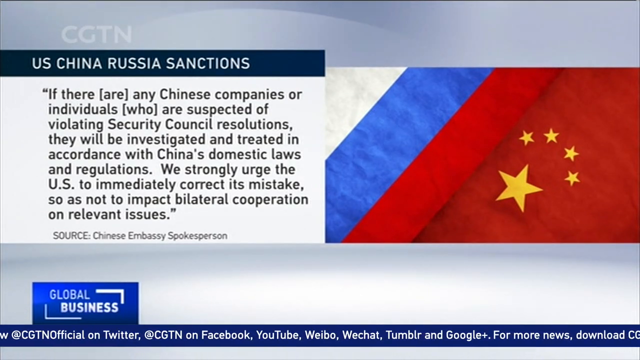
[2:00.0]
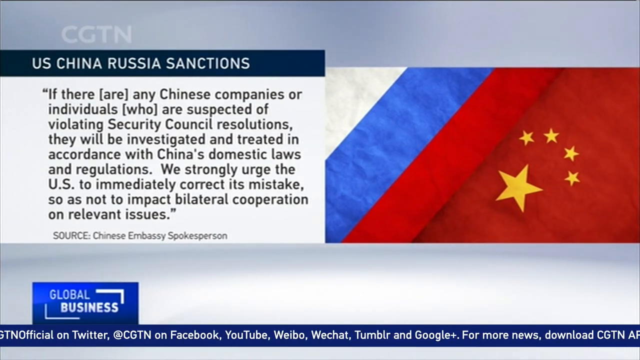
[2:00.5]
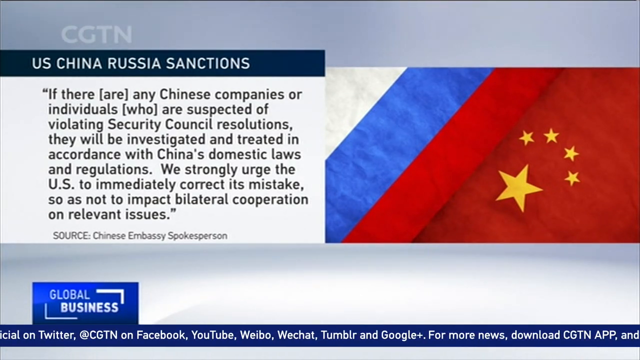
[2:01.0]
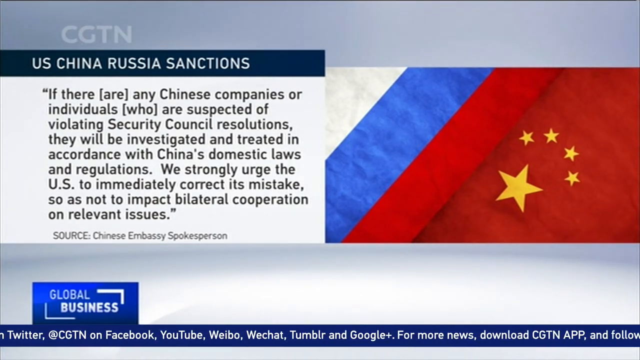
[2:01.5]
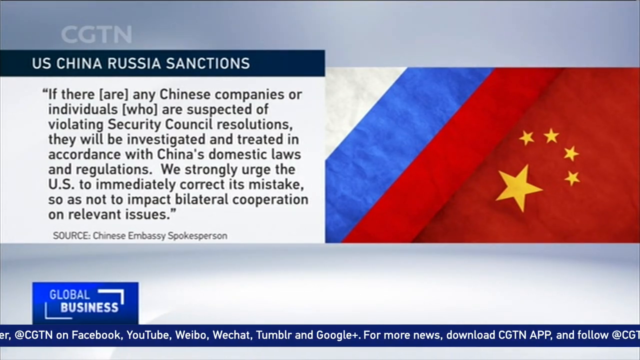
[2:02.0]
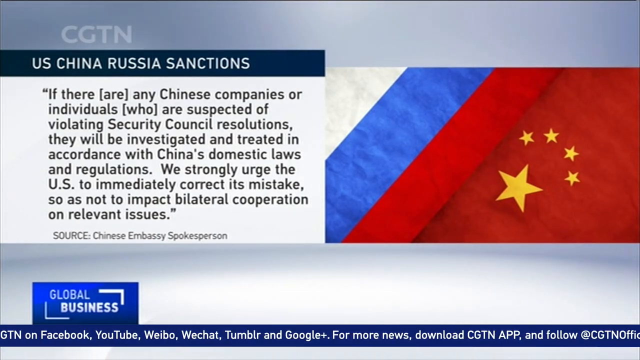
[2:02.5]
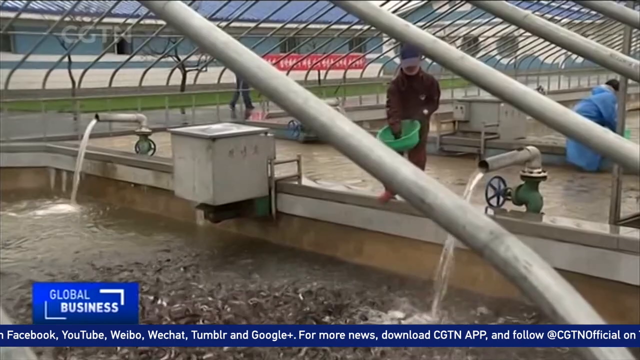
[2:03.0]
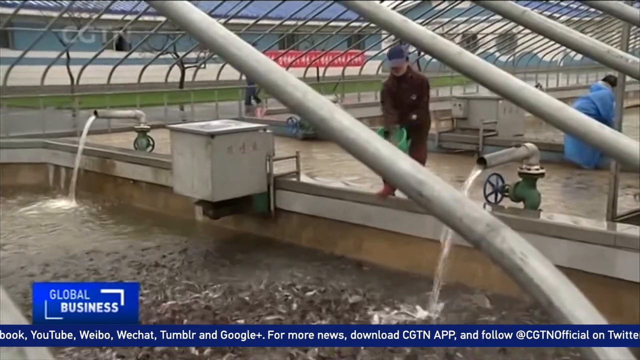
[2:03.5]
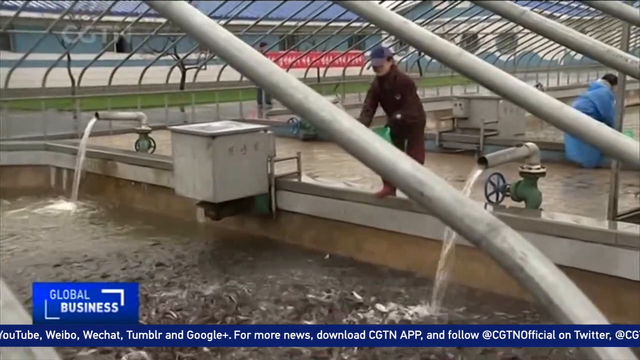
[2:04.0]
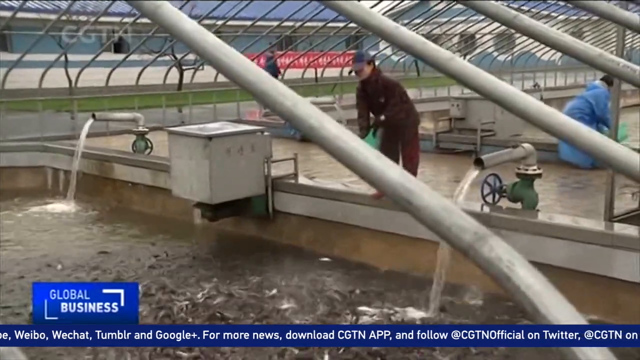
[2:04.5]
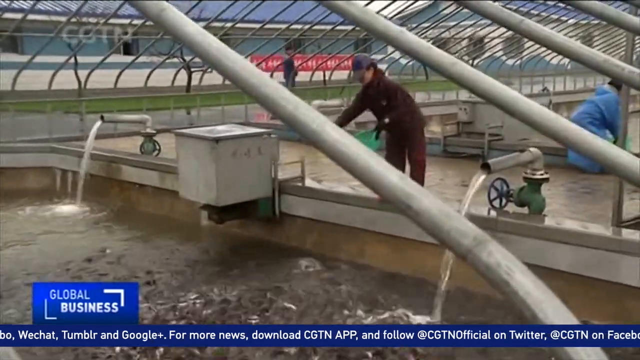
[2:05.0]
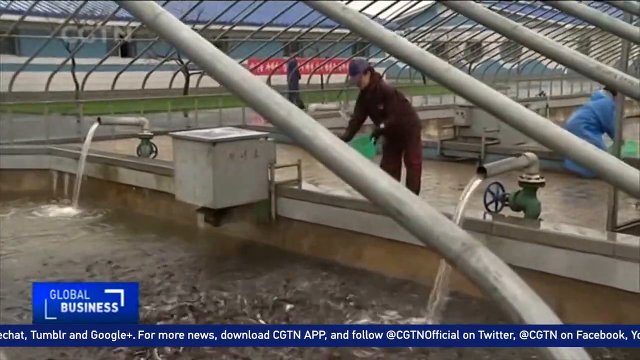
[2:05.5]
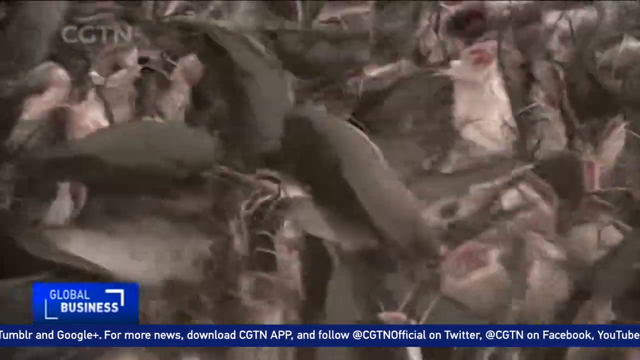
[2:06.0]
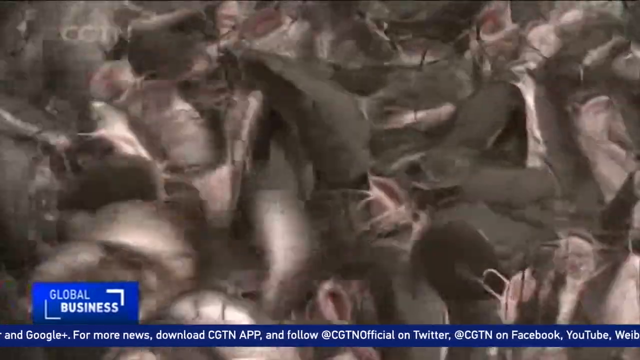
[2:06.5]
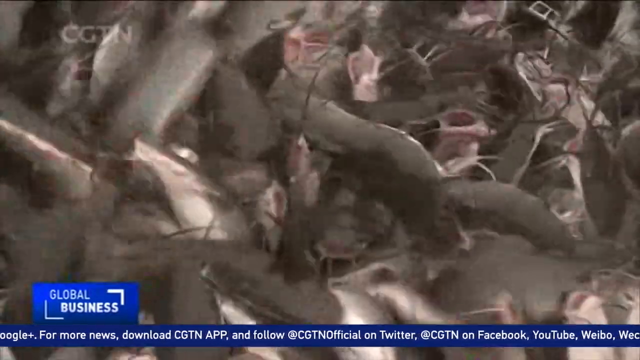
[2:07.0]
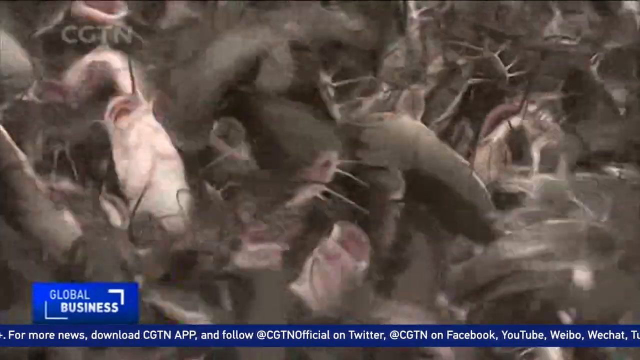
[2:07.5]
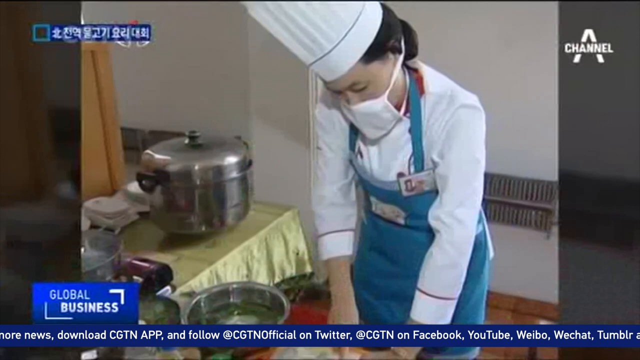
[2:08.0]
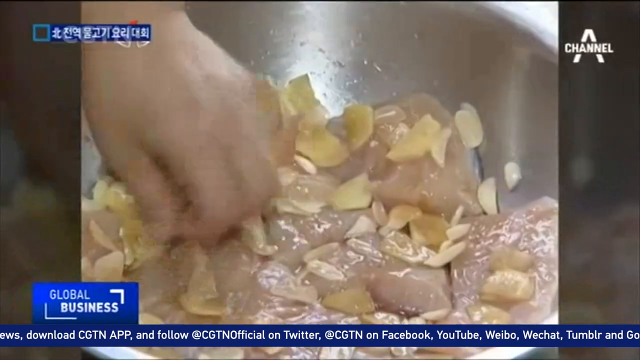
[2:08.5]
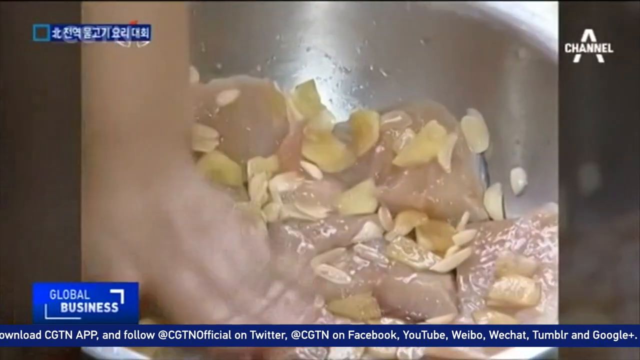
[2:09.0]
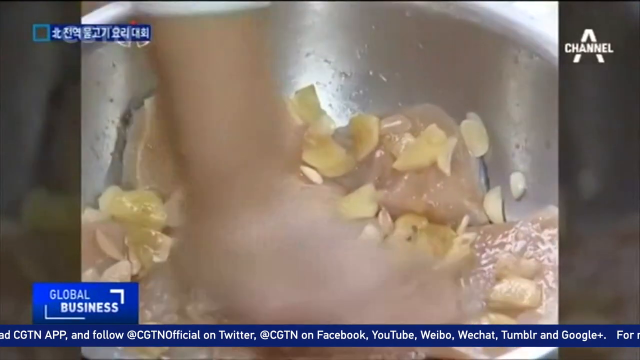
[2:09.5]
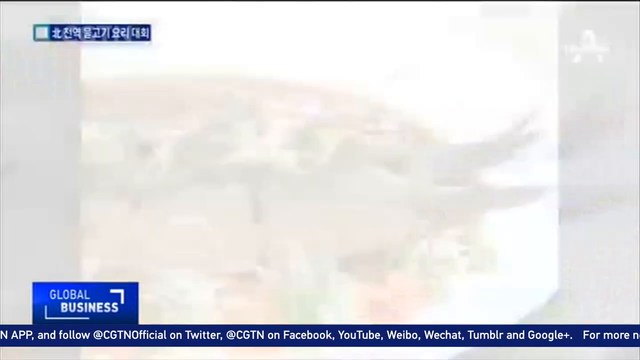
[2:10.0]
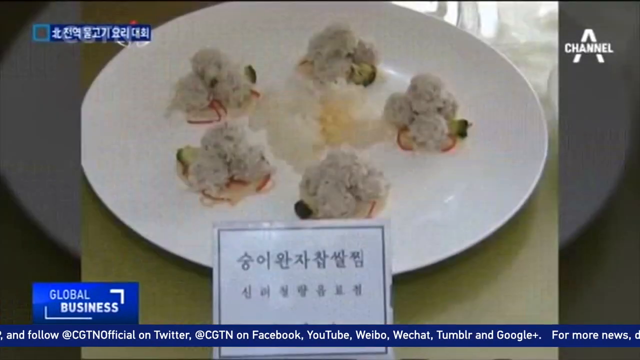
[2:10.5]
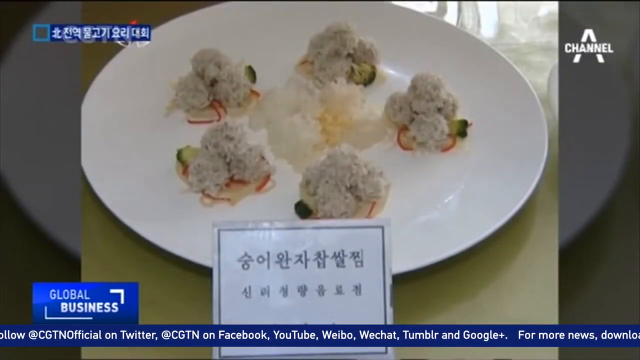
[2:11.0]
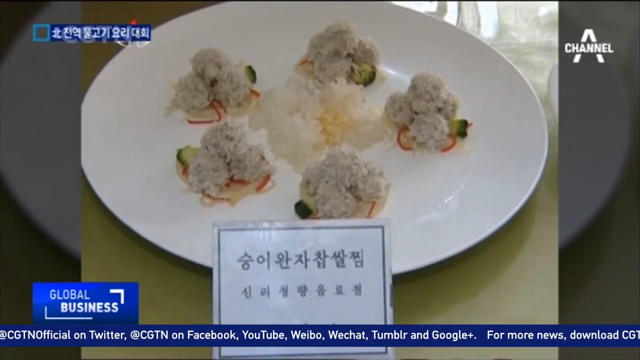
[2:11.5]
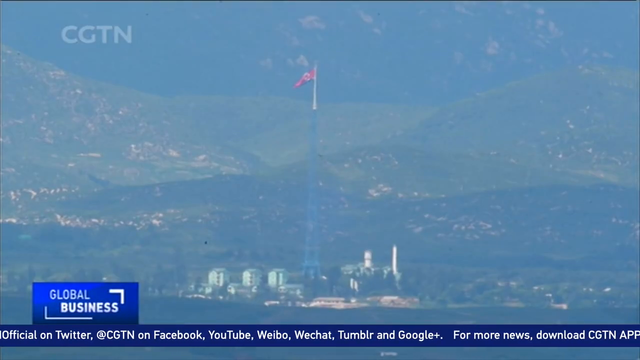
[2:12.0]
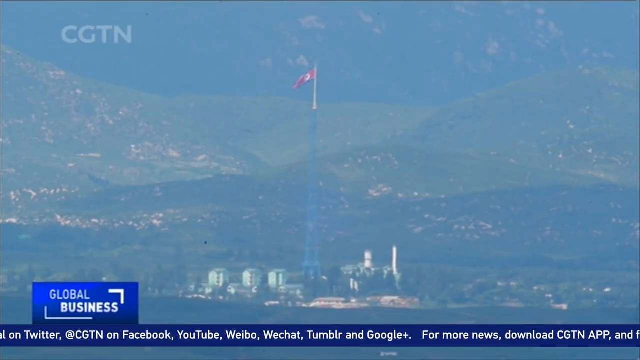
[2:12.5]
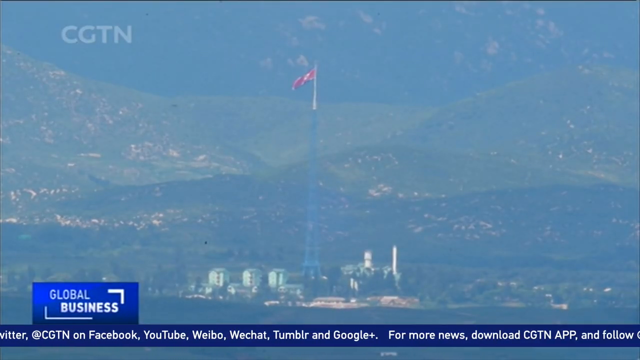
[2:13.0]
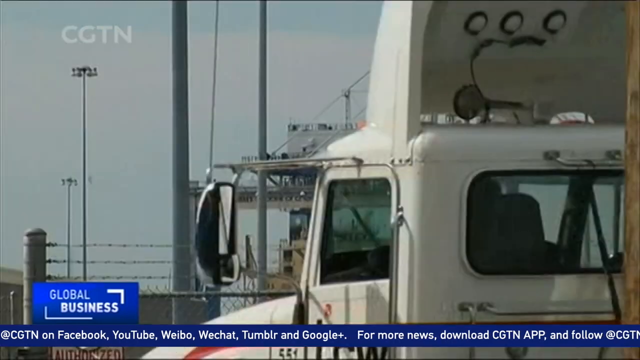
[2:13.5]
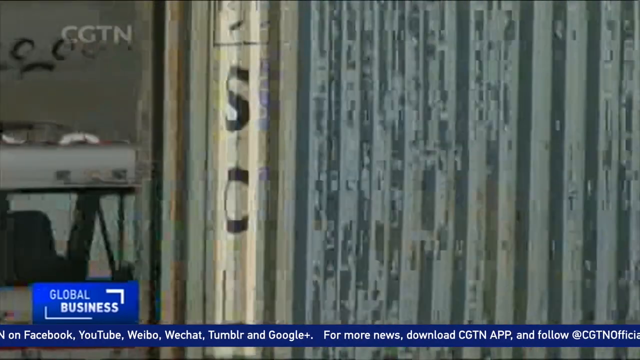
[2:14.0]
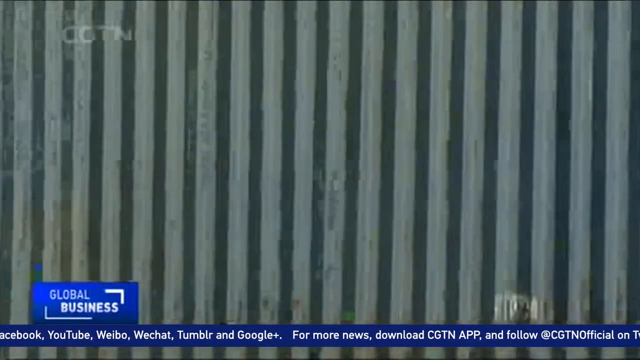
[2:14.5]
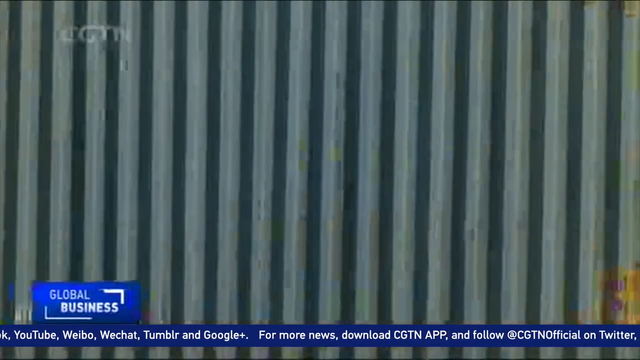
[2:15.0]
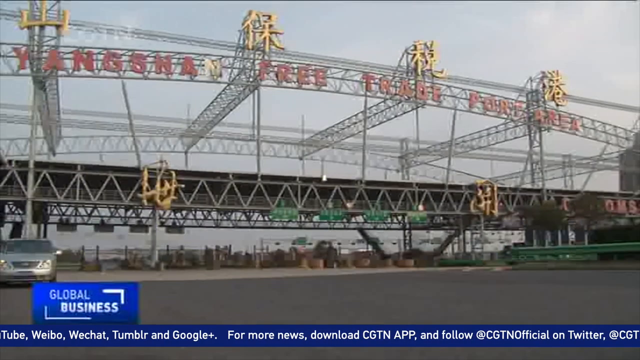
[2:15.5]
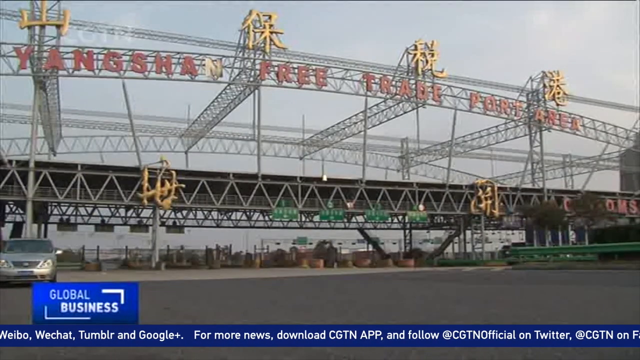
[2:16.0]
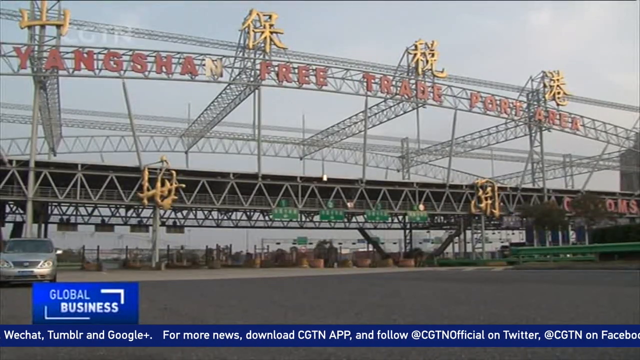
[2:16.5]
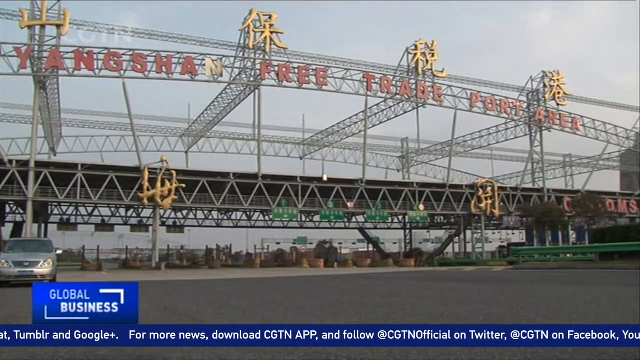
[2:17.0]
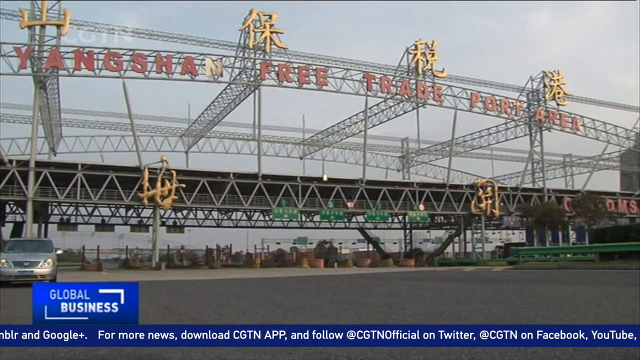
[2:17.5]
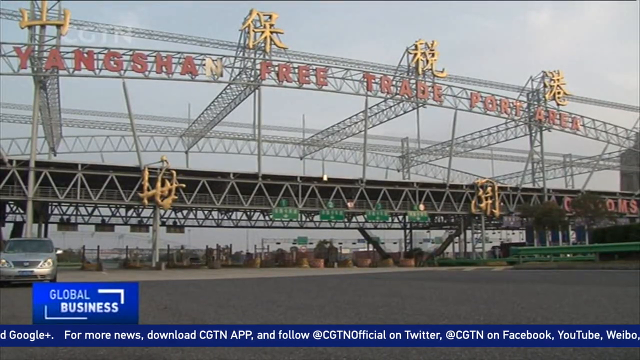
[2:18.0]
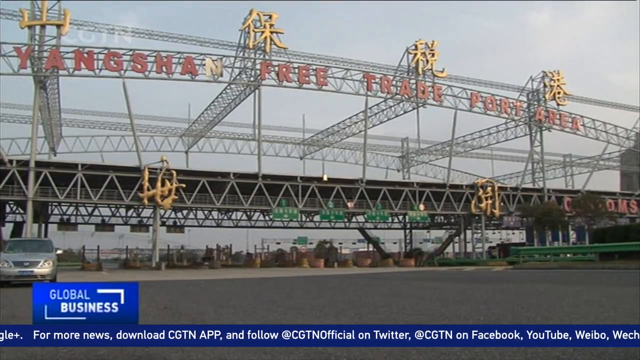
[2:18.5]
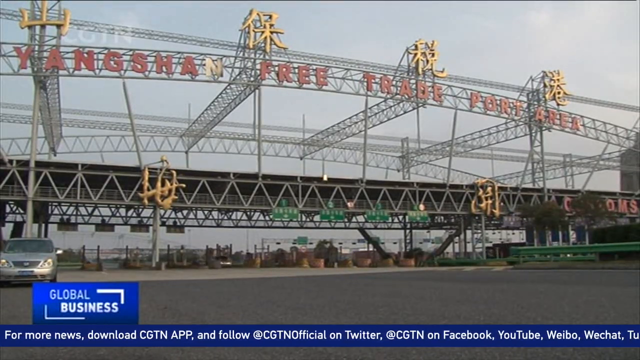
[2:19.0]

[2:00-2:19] The quote regarding US-China-Russia sanctions is on screen: "If there are any Chinese companies or individuals who are suspected of violating Security Council resolutions, they will be investigated and treated in accordance with Chinese domestic laws and regulations. We strongly urge the United States to immediately correct its mistake so as not to impact bilateral cooperation on relevant issues." The camera then cuts to several short clips of what appear to be Chinese people performing different activities: one appears to be a sushi chef, one person is fishing, and one is feeding fish, which clamor for the food. A silver sedan is then seen parked outside in an area named the free trade port area, the Yangshuo Free Trade Port area, with several Chinese letters above the name.